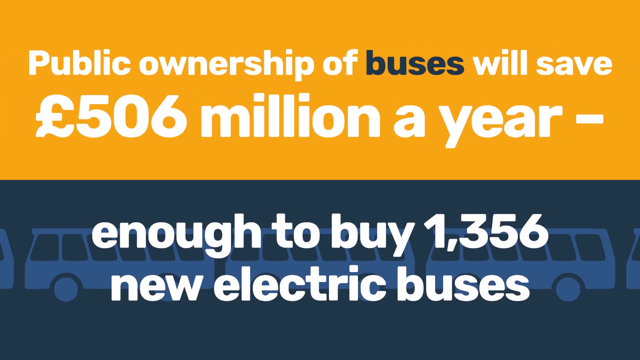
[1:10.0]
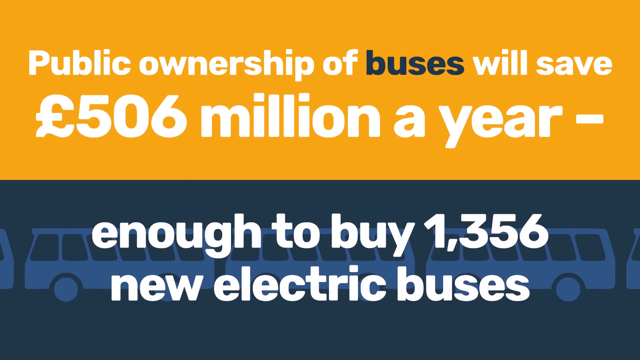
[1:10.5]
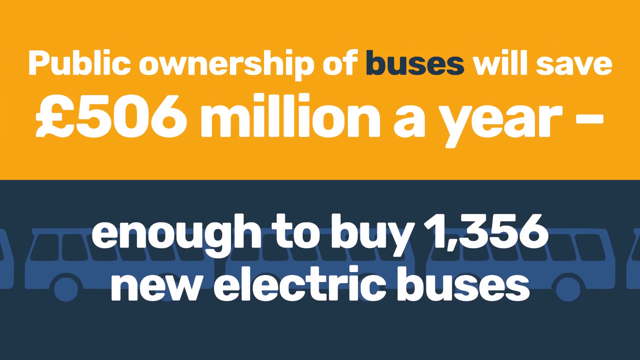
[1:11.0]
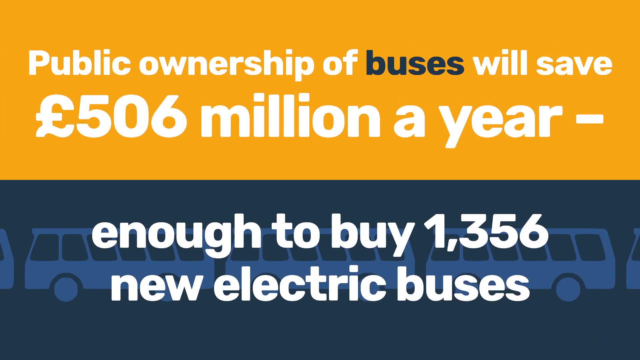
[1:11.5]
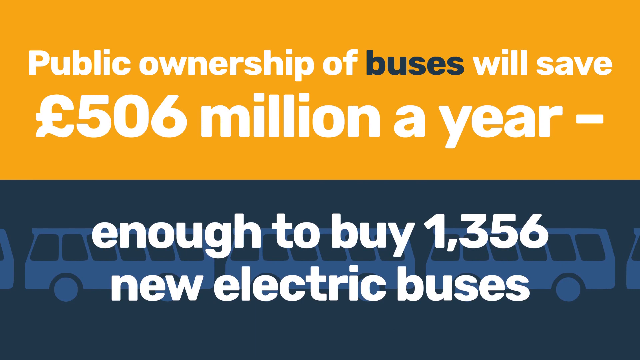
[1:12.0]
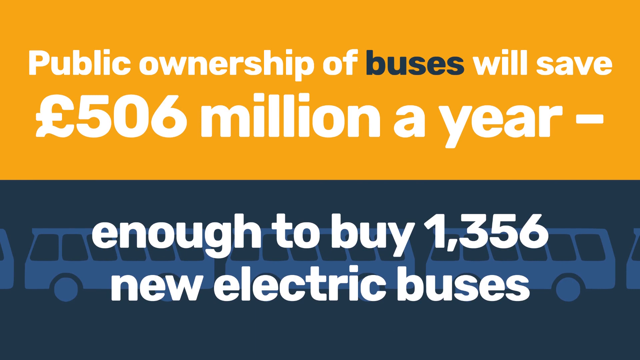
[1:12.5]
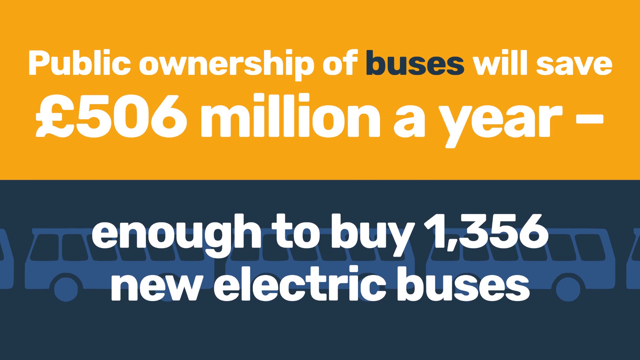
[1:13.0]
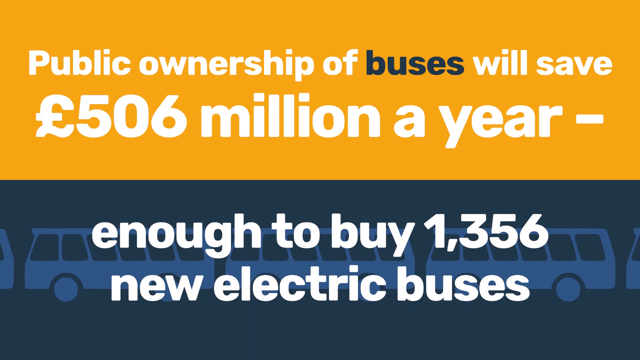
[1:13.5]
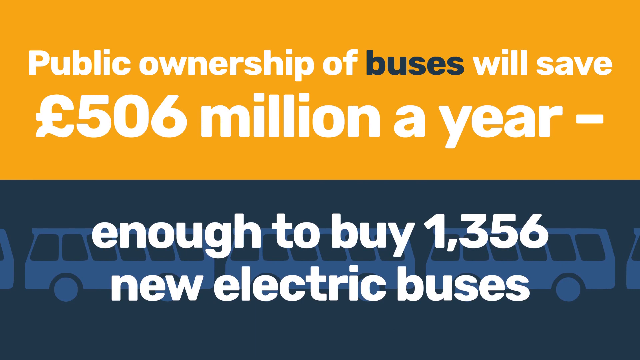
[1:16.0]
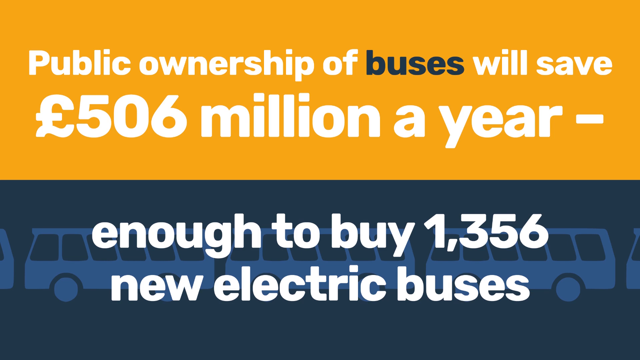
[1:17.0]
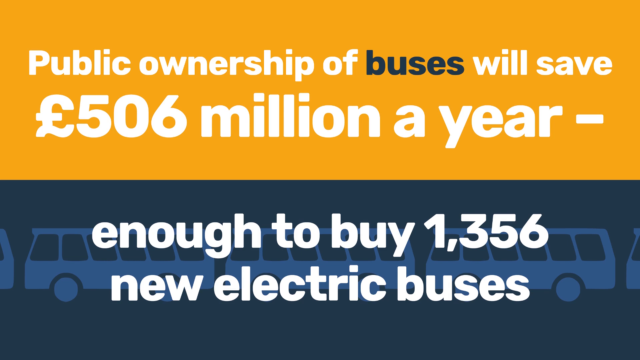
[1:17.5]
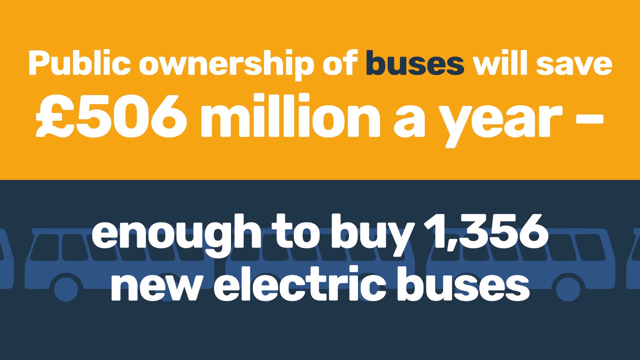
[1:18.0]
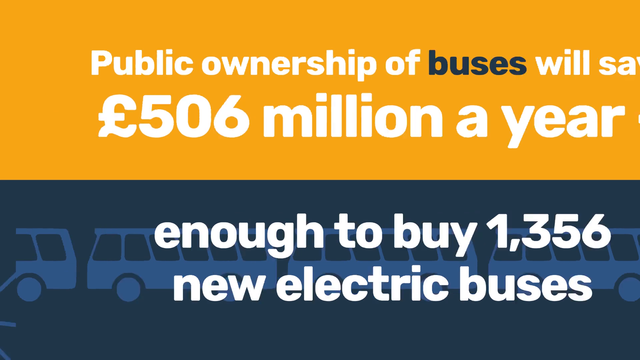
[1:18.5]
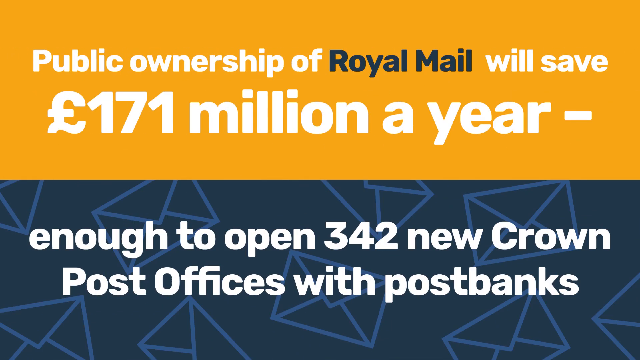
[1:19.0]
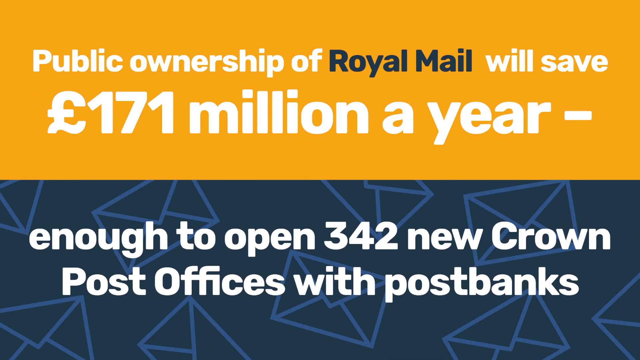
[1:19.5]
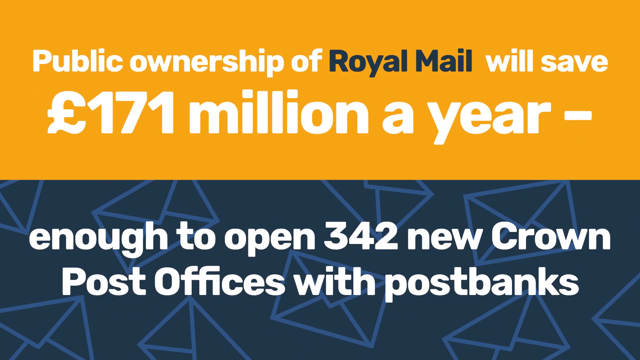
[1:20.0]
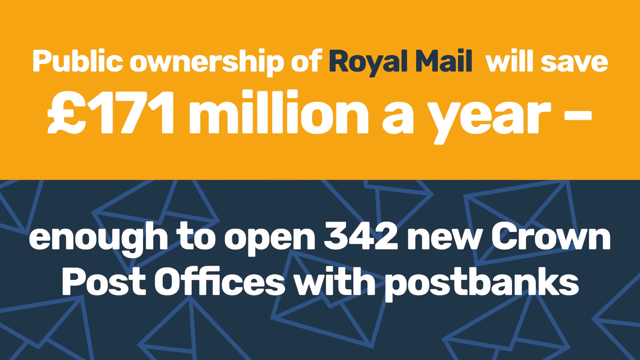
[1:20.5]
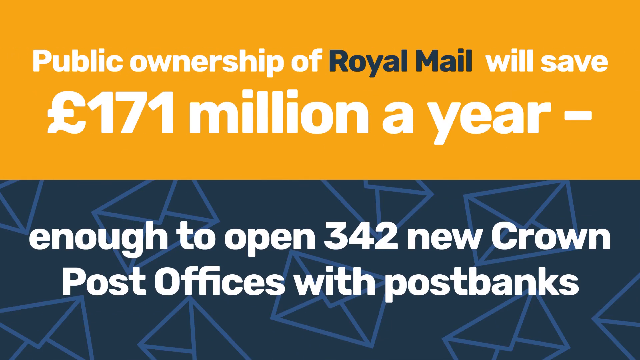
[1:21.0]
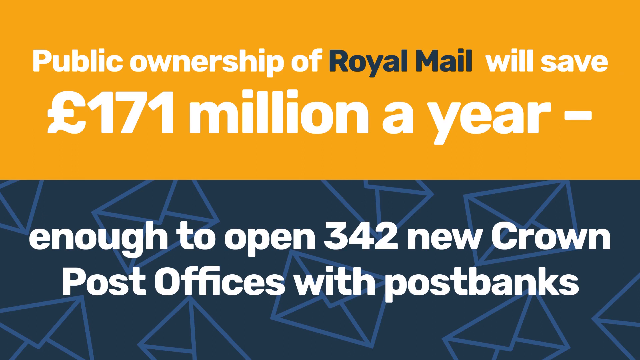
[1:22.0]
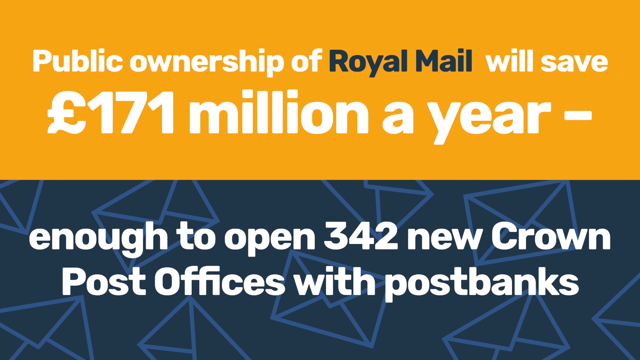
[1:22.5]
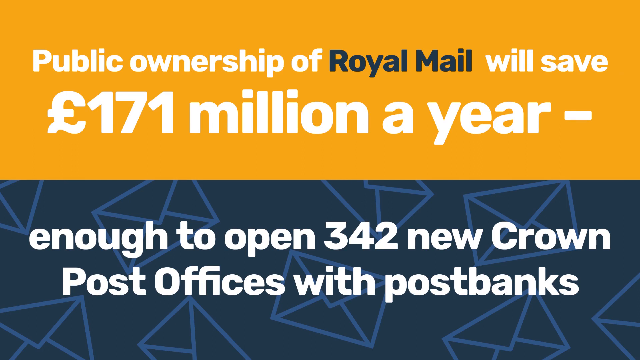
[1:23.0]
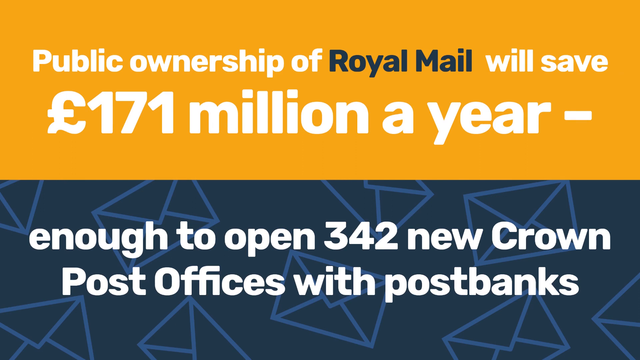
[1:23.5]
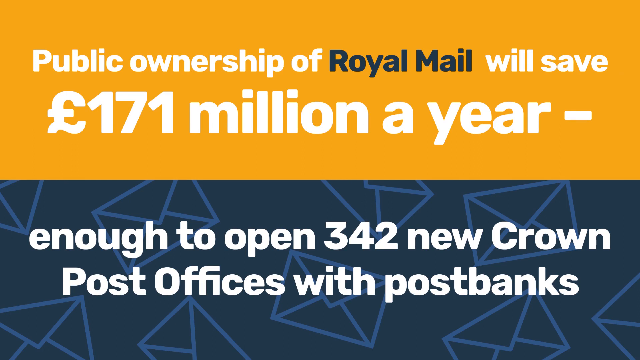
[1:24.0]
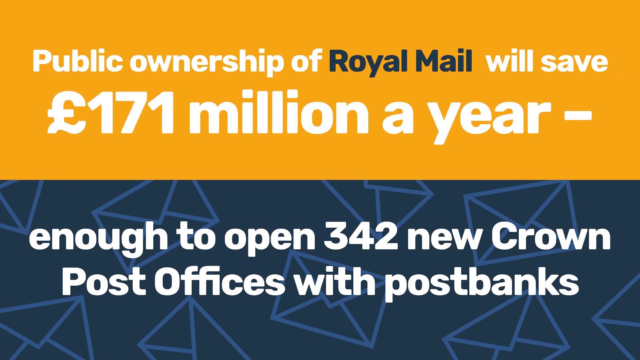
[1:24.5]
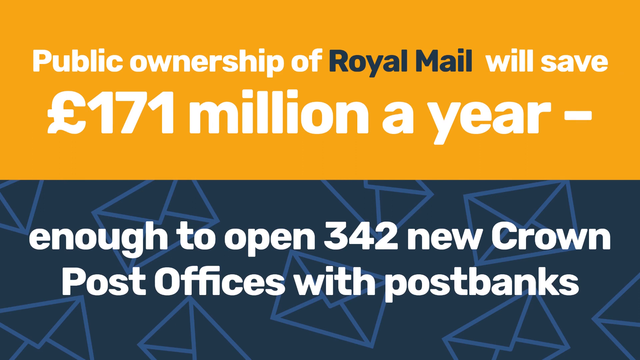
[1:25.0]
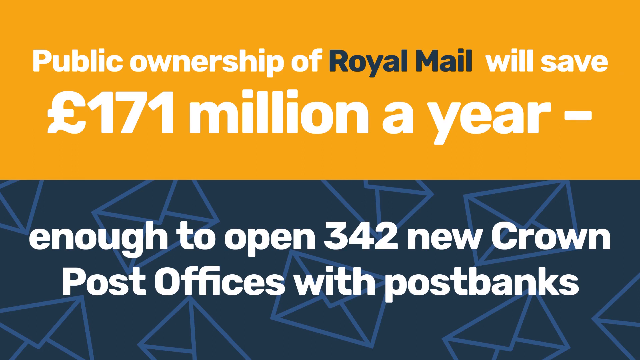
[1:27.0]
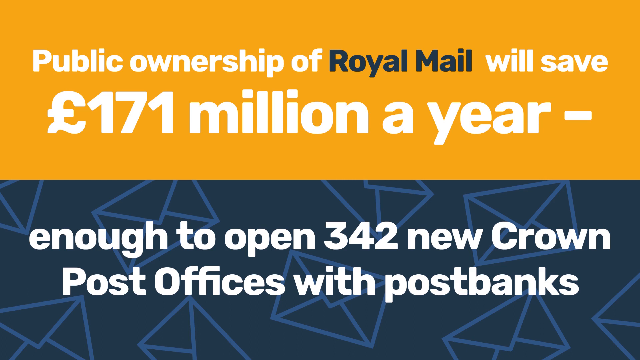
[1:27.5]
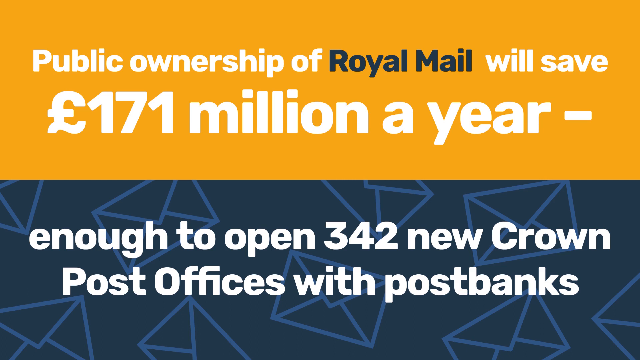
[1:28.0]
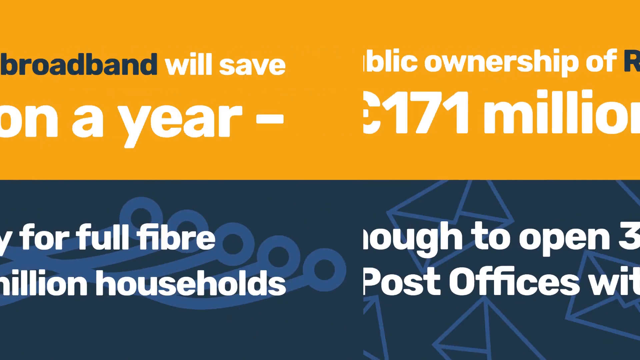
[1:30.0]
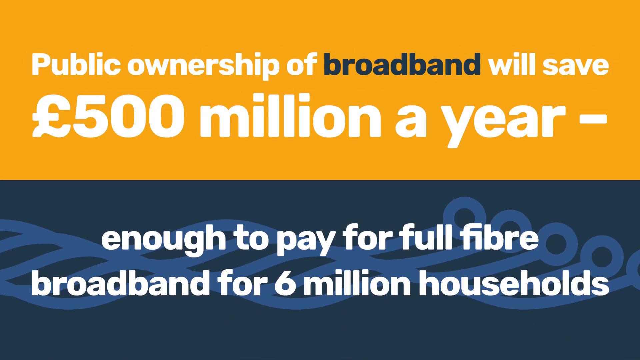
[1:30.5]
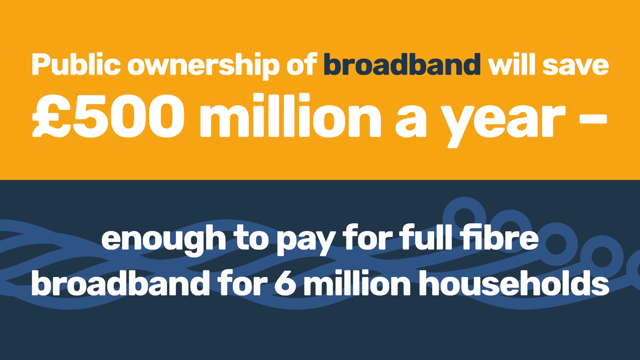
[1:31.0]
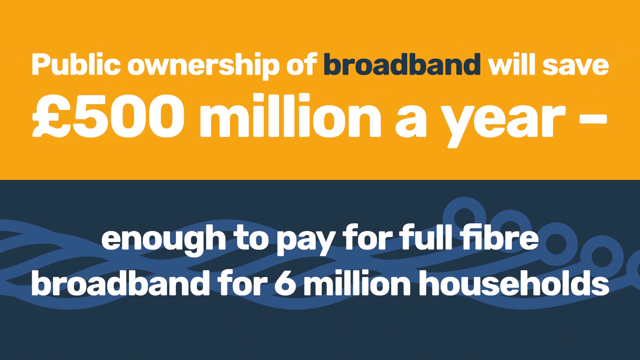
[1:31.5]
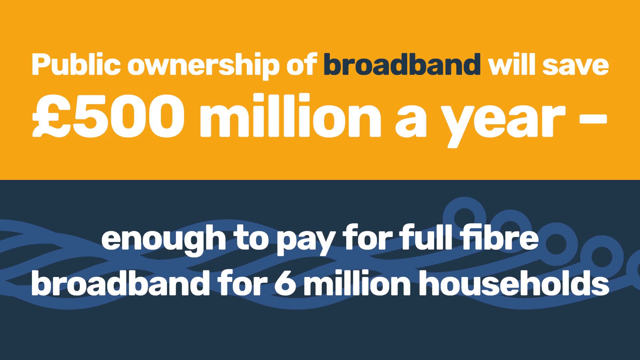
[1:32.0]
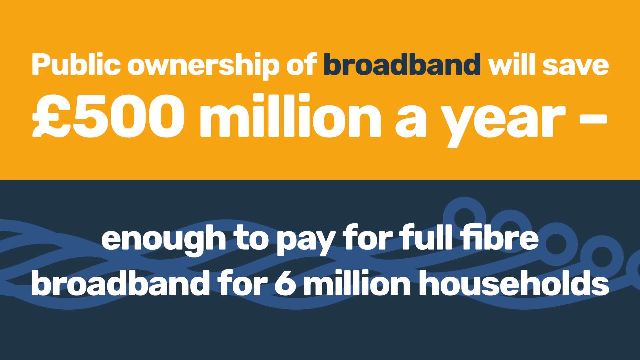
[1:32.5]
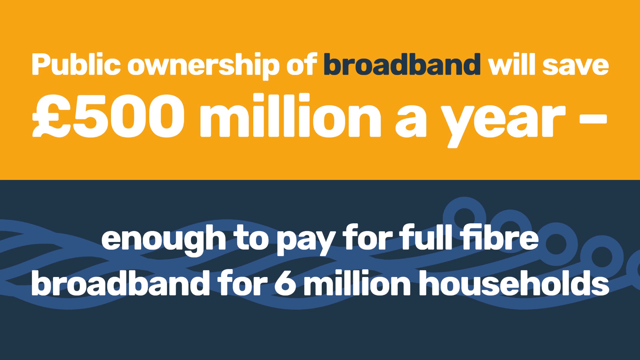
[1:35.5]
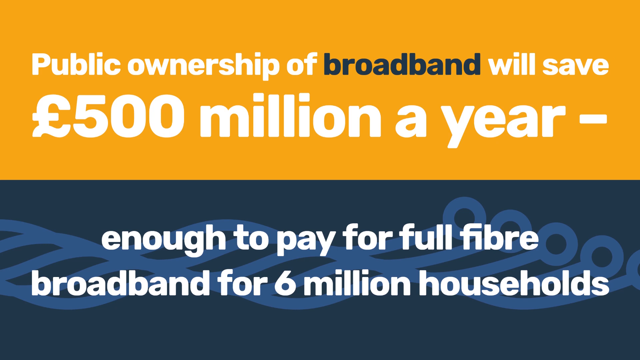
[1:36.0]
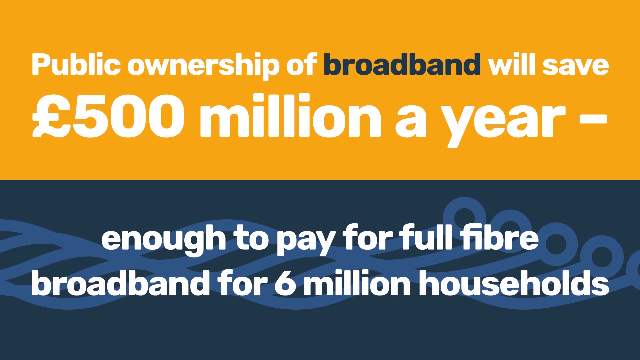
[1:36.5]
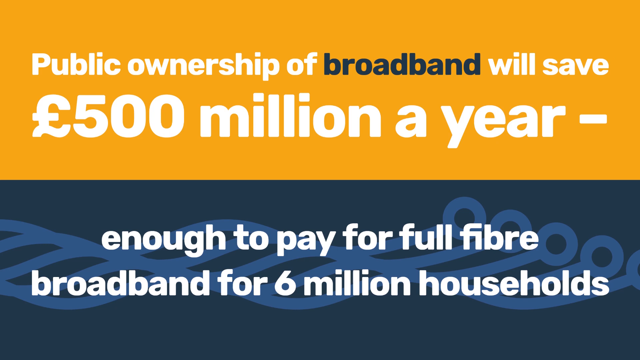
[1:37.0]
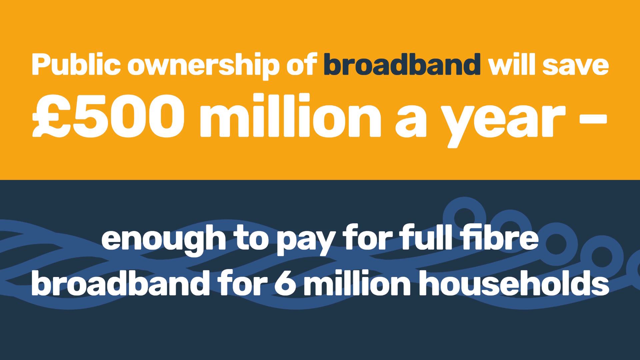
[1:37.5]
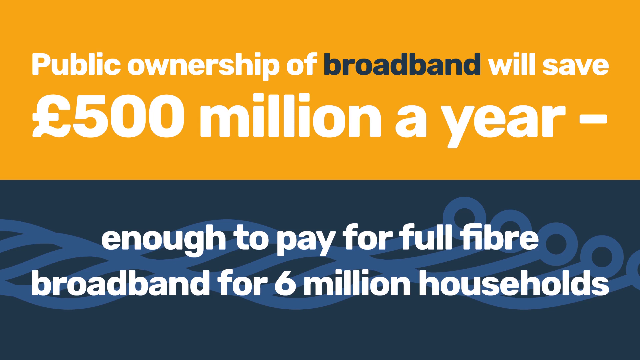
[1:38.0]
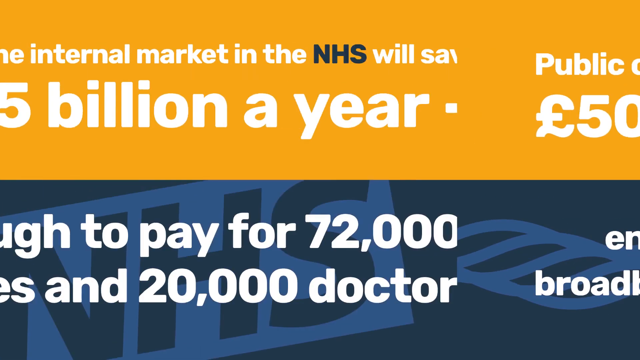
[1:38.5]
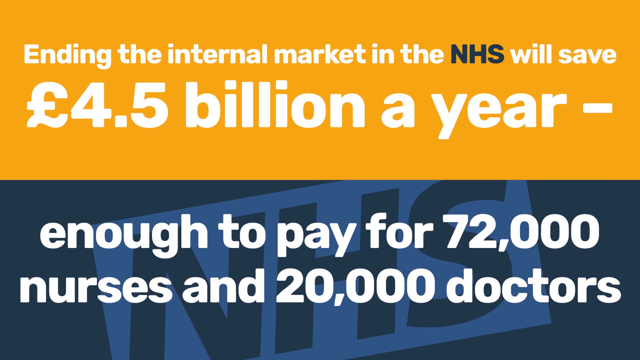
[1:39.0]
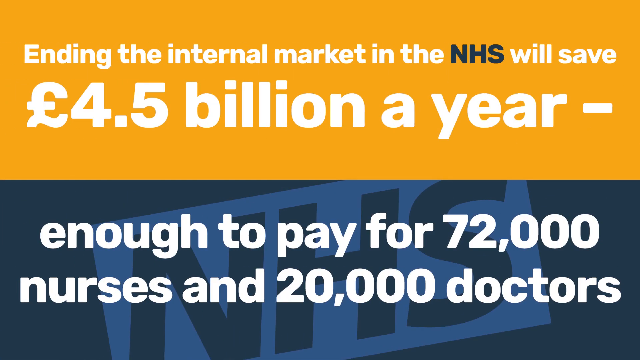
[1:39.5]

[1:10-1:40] More of the same slides with a yellow top and a blue bottom follow, each stating a saving amount on the top and what it would pay for on the bottom. One says public ownership could provide 171 million euros a year, enough to open 342 new Crown post offices with post banks. The slides move fairly slowly. The next concerns broadband, saving $500 million a year, which would provide full fiber broadband for 6 million individuals. The last states that 4.5 billion euros a year could be saved for the NHS, enough to pay for 72,000 nurses and 200,000 doctors.